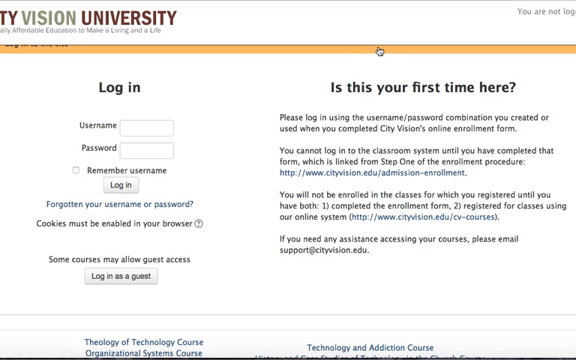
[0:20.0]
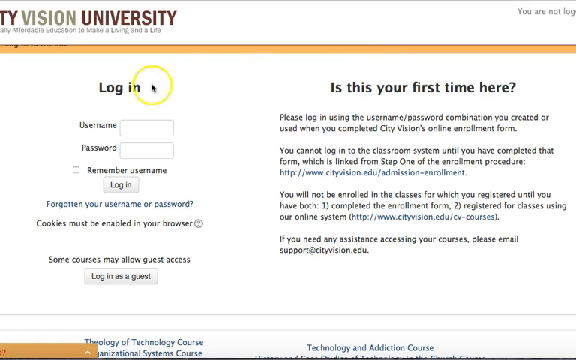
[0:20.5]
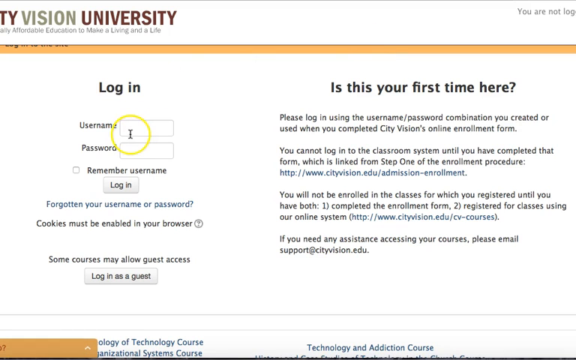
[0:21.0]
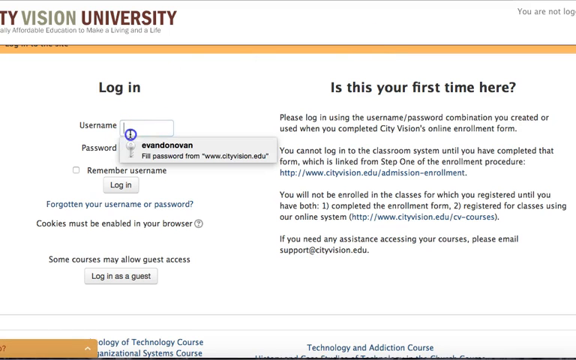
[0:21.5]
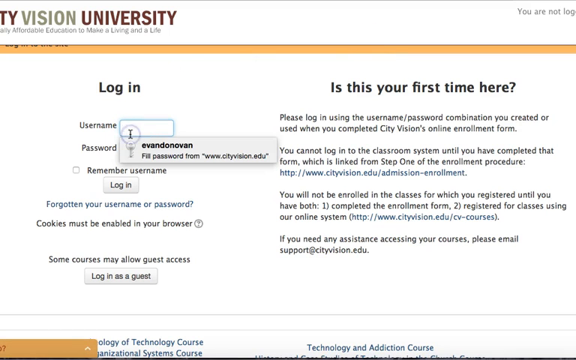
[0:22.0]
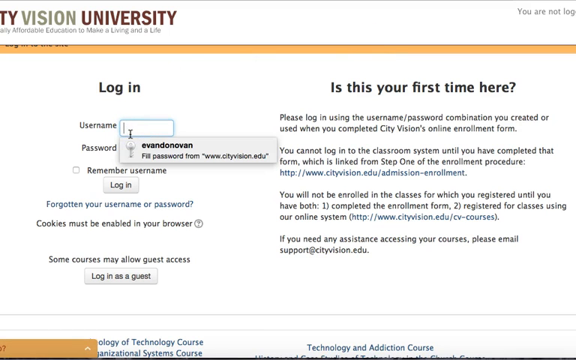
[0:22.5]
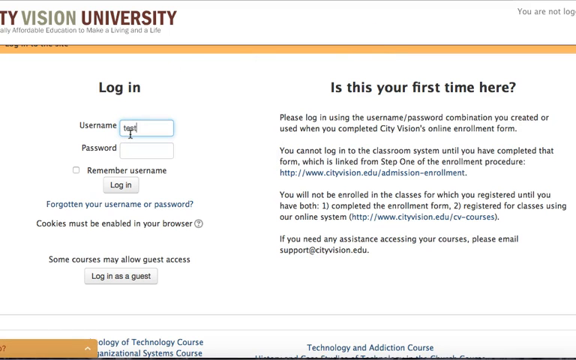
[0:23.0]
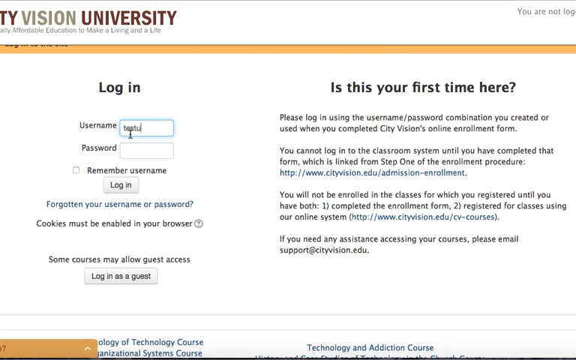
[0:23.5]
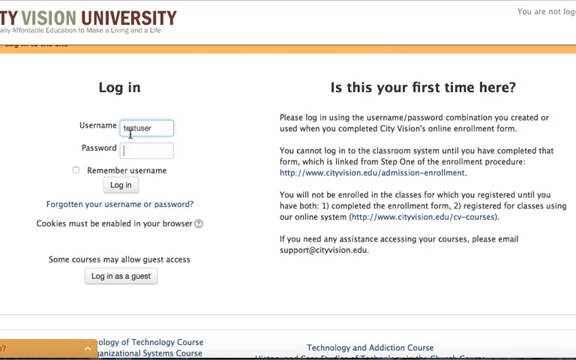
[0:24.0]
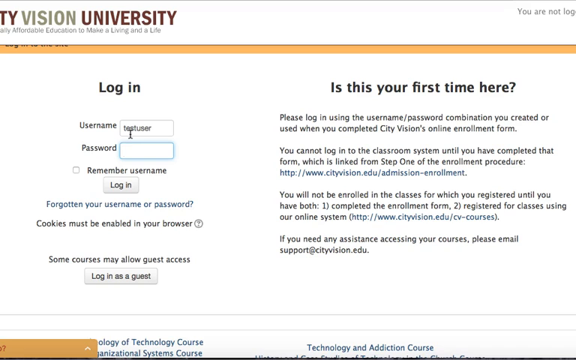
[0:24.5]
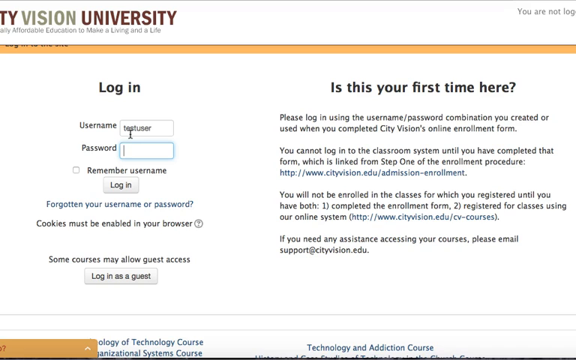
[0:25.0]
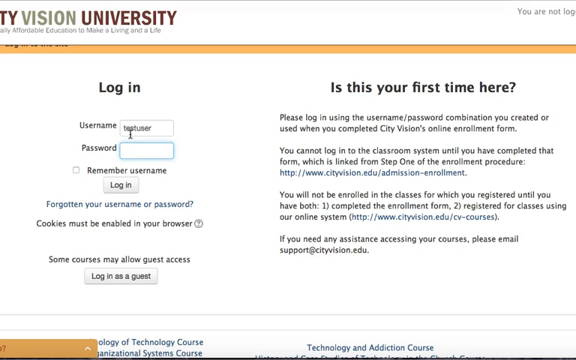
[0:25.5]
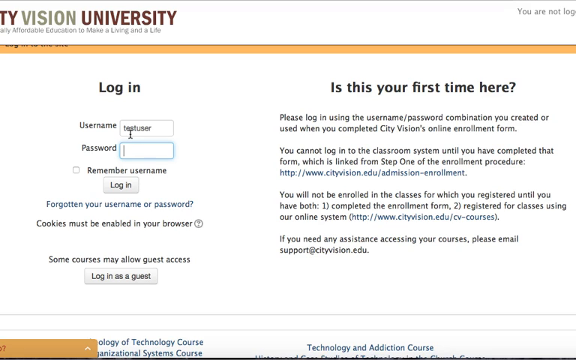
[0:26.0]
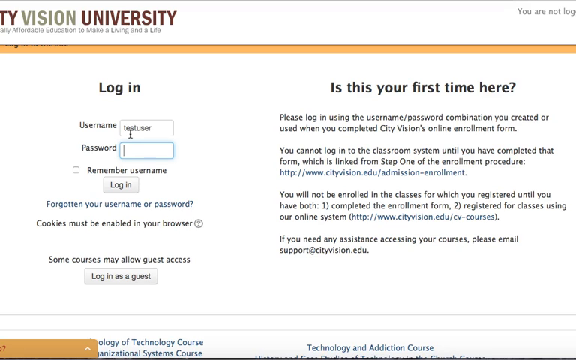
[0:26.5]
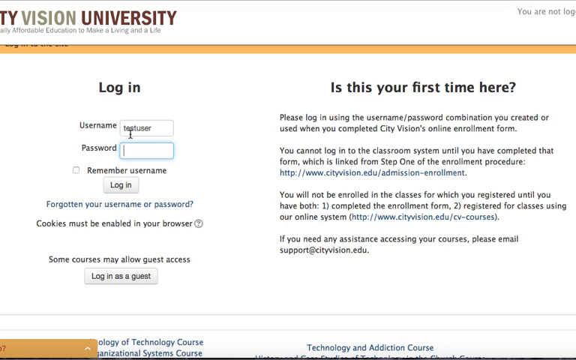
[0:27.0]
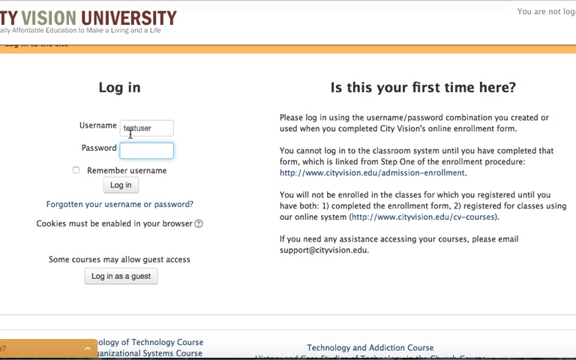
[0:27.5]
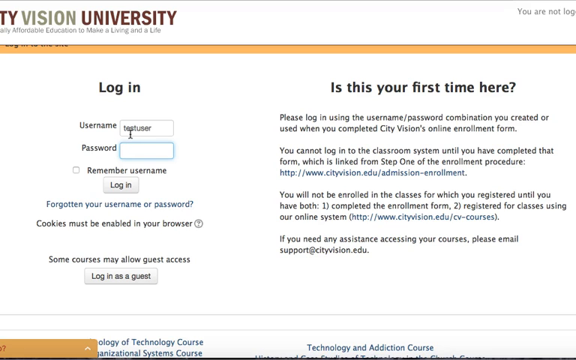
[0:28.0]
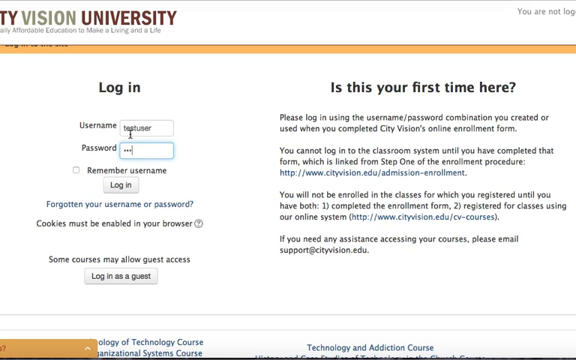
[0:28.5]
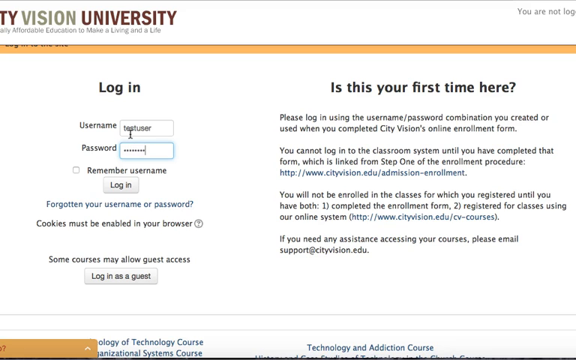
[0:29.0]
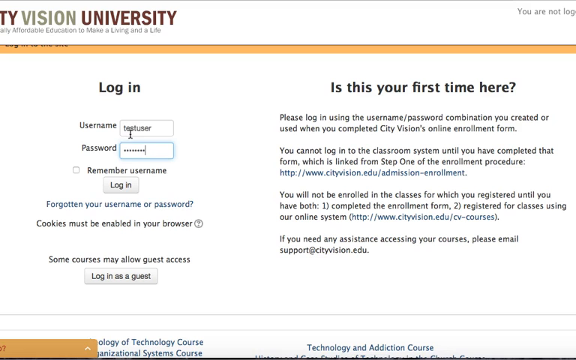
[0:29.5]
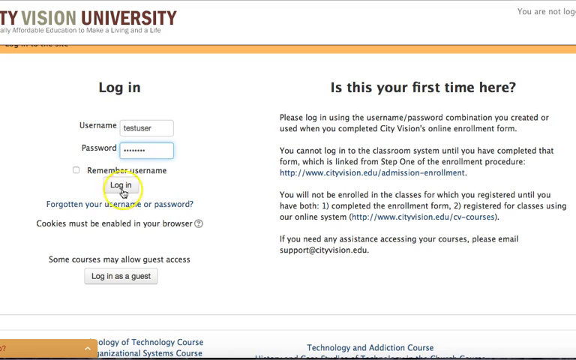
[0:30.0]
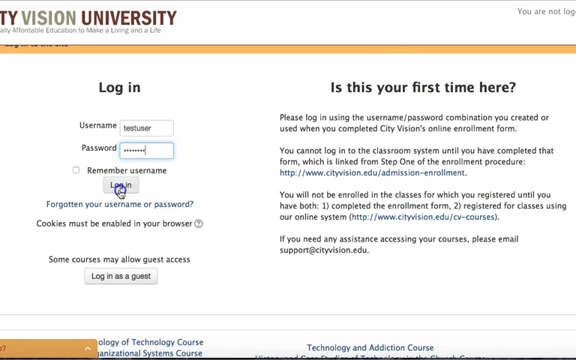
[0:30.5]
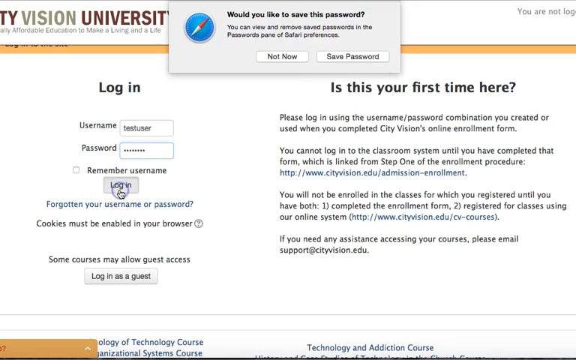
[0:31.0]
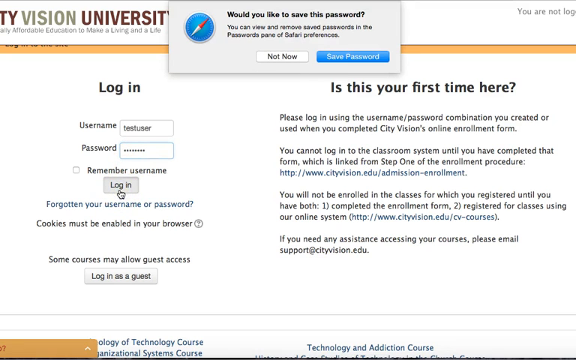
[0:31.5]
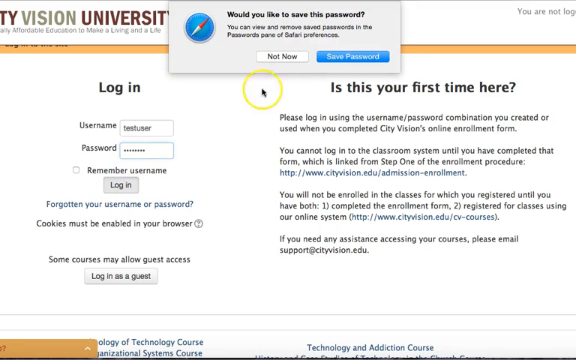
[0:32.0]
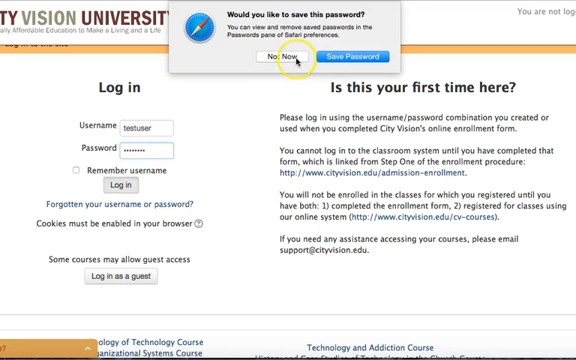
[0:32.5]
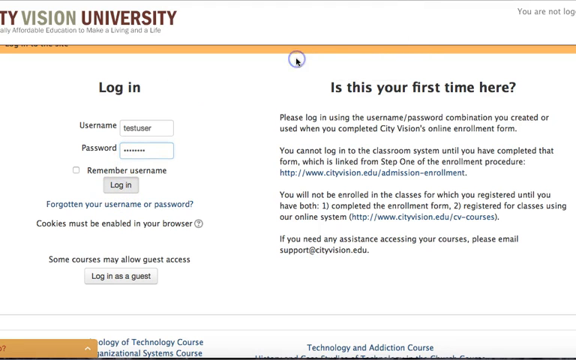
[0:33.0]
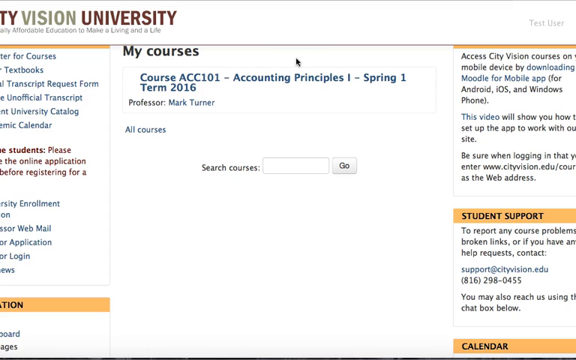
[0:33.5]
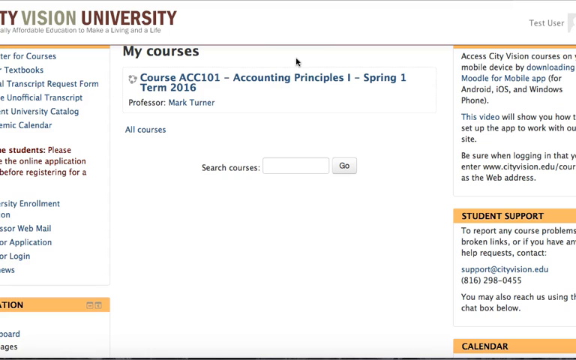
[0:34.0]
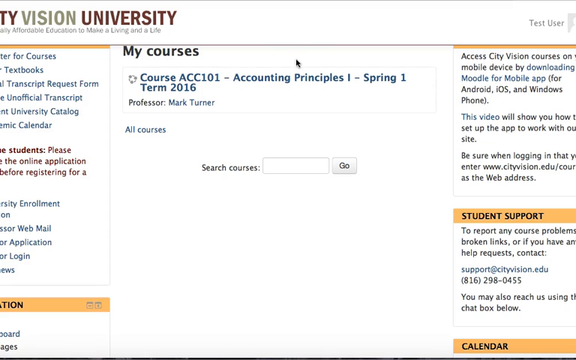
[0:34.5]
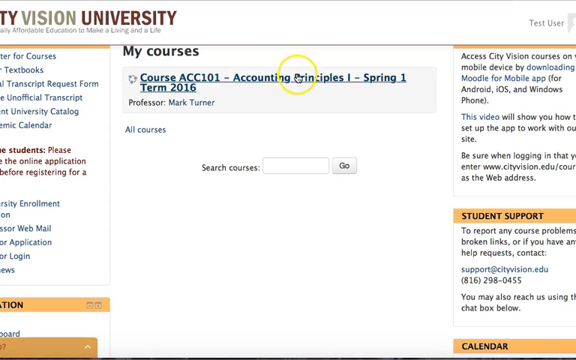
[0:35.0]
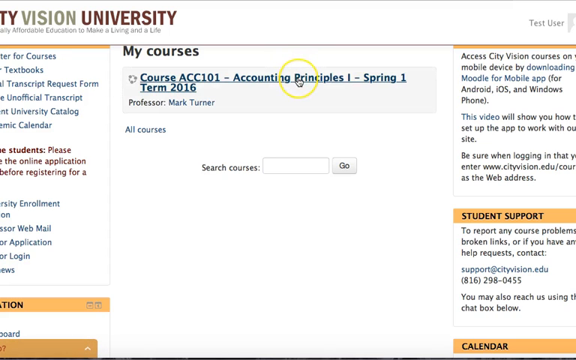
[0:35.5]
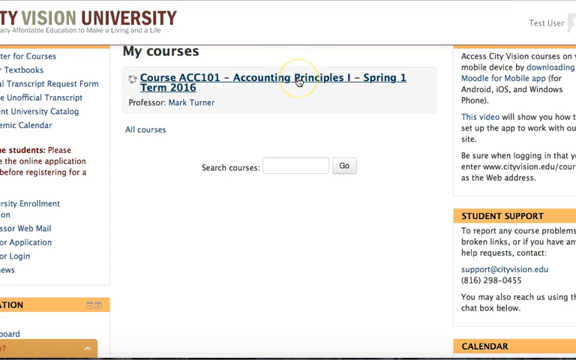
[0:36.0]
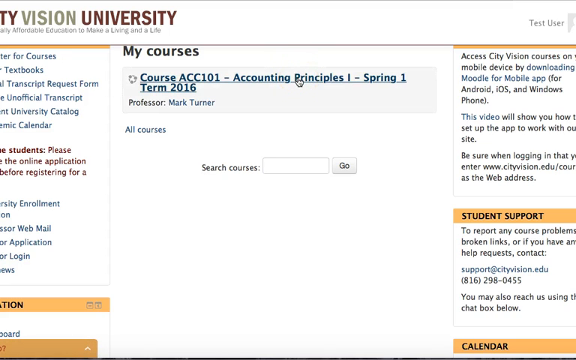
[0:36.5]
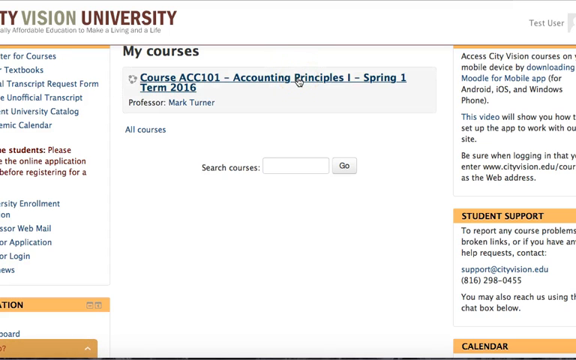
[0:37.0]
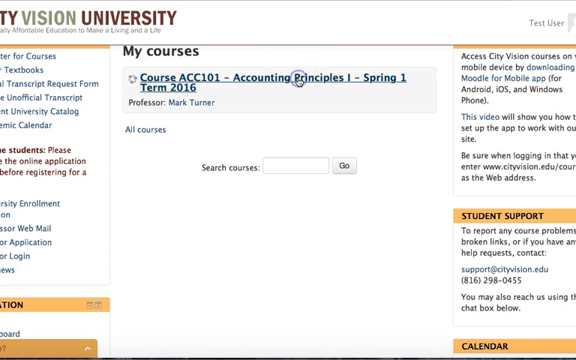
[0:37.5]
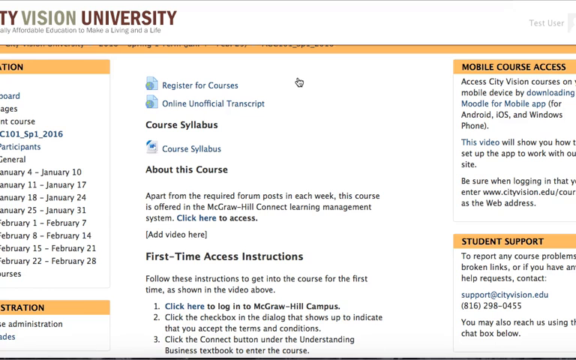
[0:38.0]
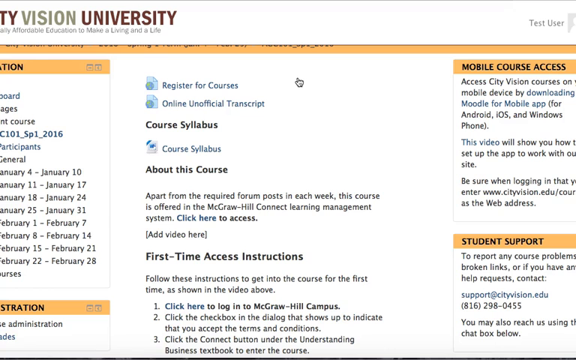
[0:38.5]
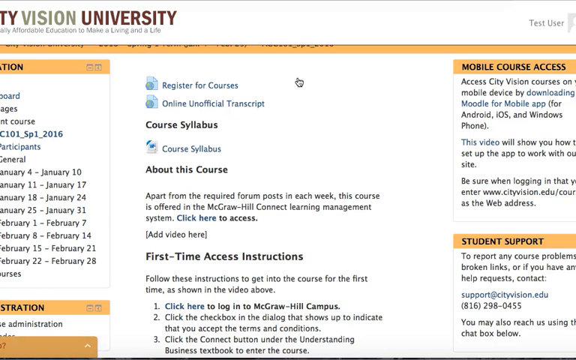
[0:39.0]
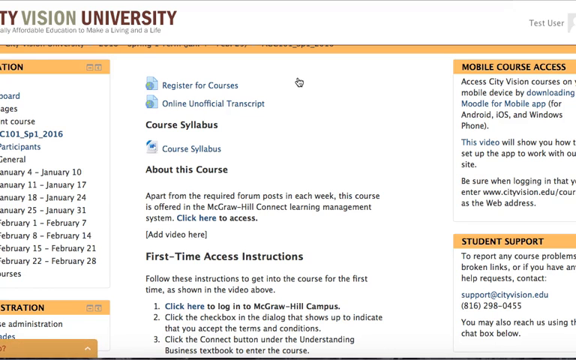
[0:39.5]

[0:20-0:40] The course login page is shown. On the left side is the login section: a username field, a password field, a "remember me" box, and a login button, followed by a link for a forgotten username or password, a note that cookies must be enabled in the browser, and at the bottom left the text "some courses may allow guest access" with "log in as a guest". On the right side are three or four short paragraphs for first-time users, including "Please log in using username / password combination you created or used when you completed the City Vision's online enrollment form", a link to step one of the enrollment procedure, "You will not be enrolled in classes for which you registered until you have both completed the enrollment form and registered for a class using the online system", and another link. At the bottom it says "if you need any assistance accessing your course, please email us" followed by an email address. The mouse goes to the username field, a username is typed, then a password, the remember box is clicked, and the user logs in. The next page lists one course, Accounting Principles 1 for the spring term of 2016. The mouse hovers over the link and clicks it, opening the course.